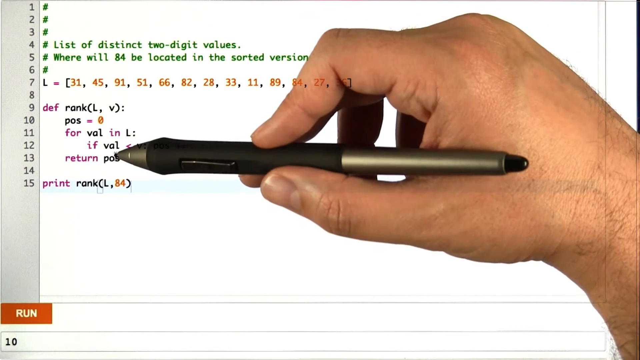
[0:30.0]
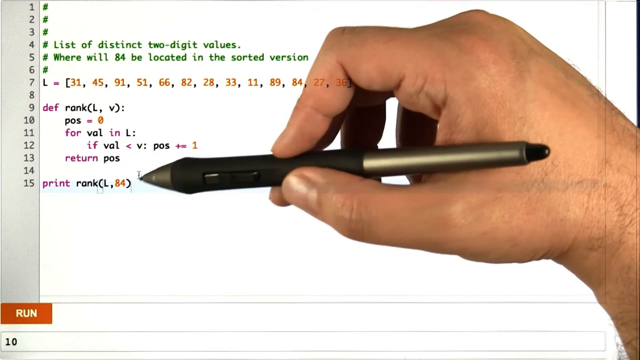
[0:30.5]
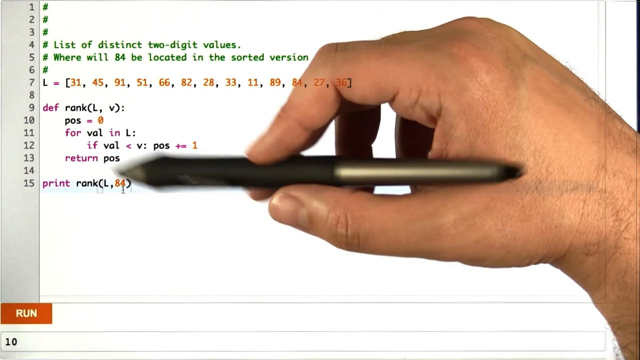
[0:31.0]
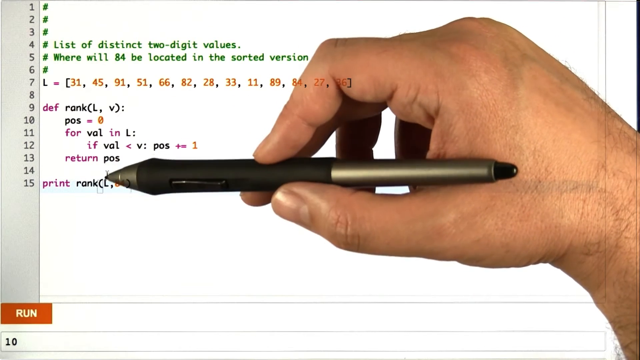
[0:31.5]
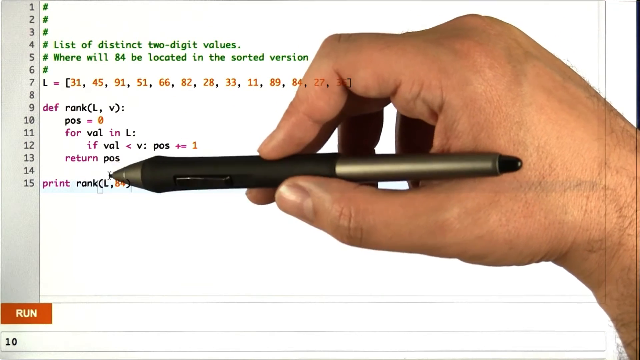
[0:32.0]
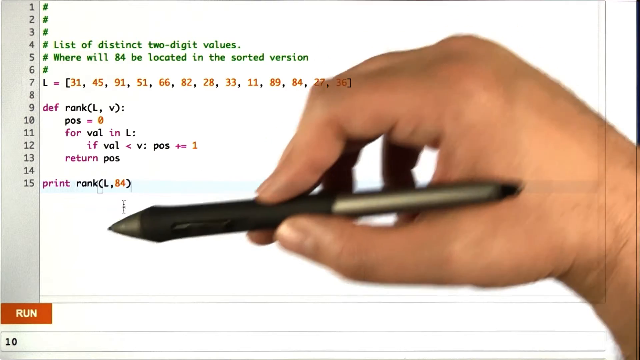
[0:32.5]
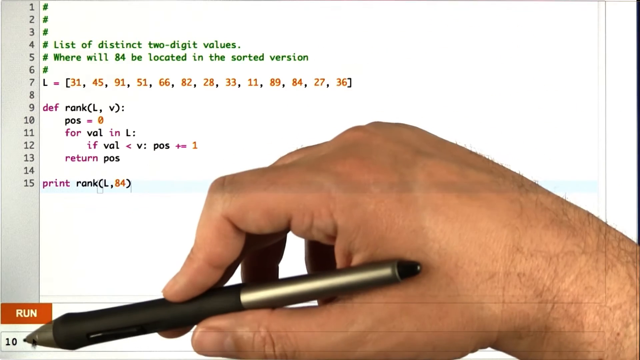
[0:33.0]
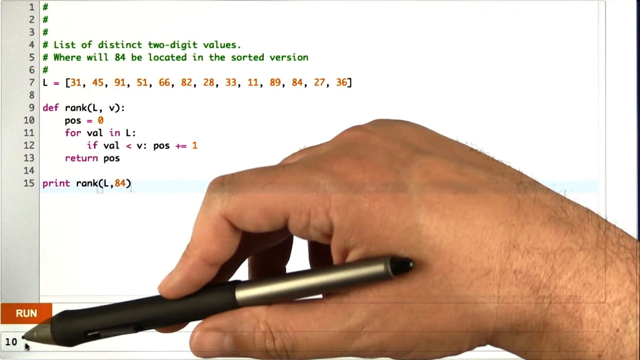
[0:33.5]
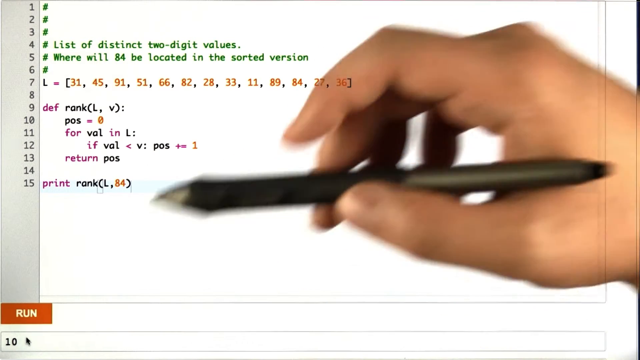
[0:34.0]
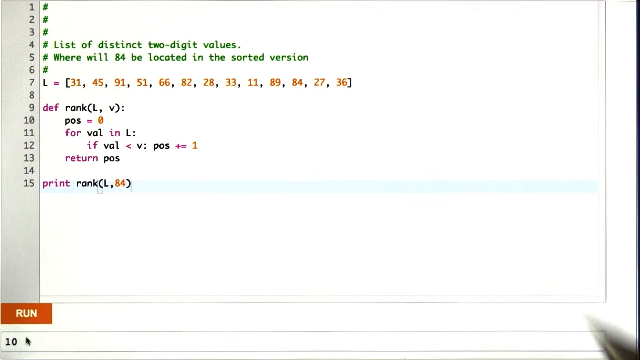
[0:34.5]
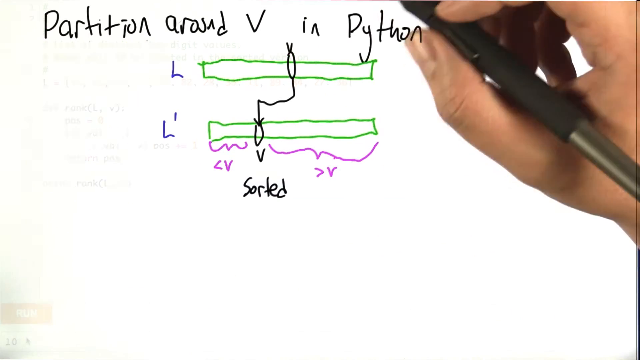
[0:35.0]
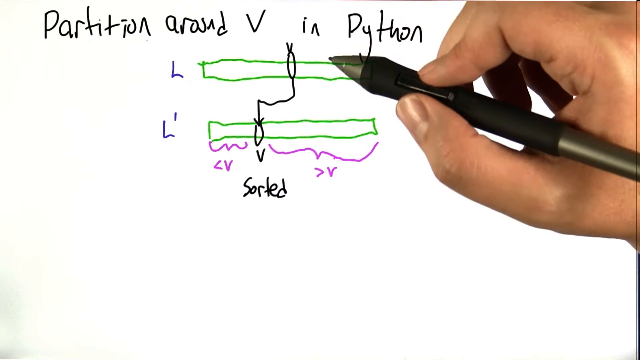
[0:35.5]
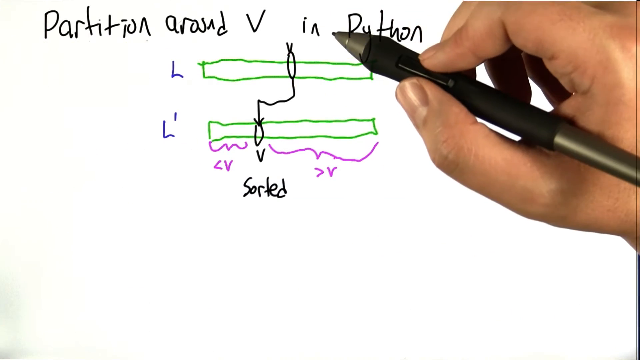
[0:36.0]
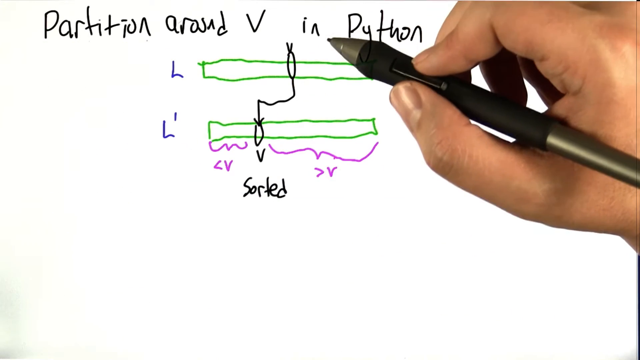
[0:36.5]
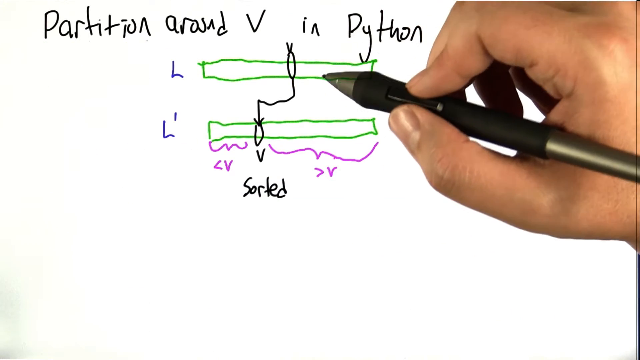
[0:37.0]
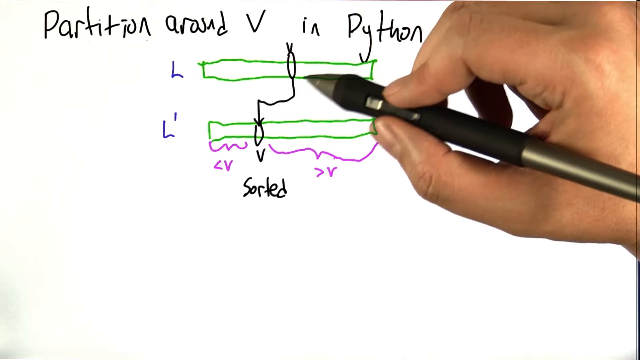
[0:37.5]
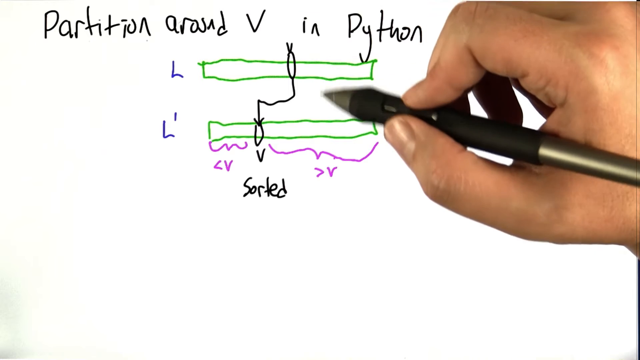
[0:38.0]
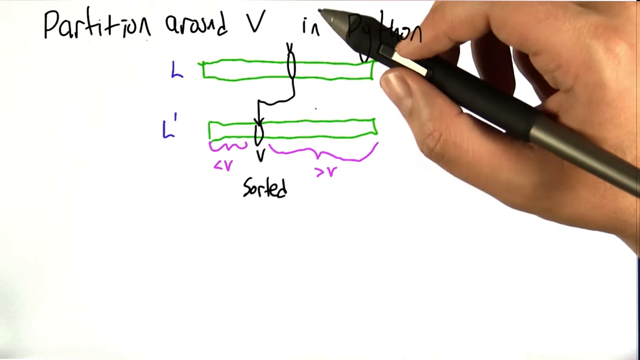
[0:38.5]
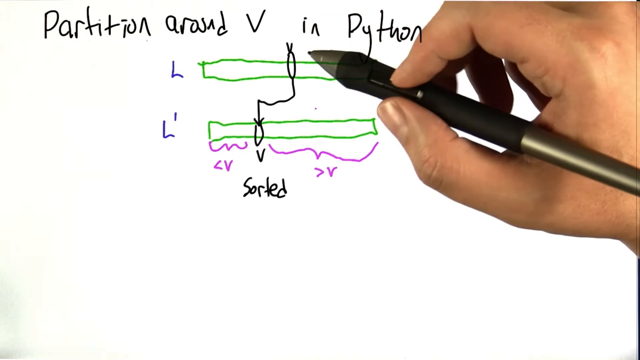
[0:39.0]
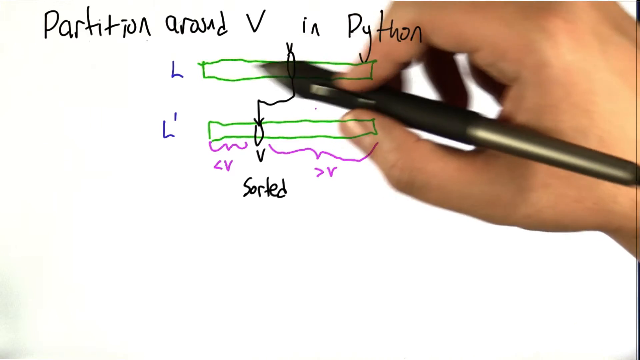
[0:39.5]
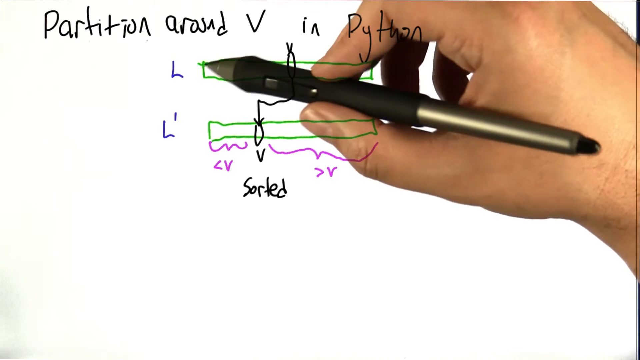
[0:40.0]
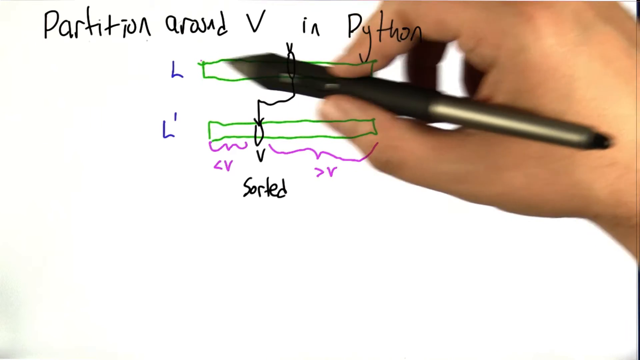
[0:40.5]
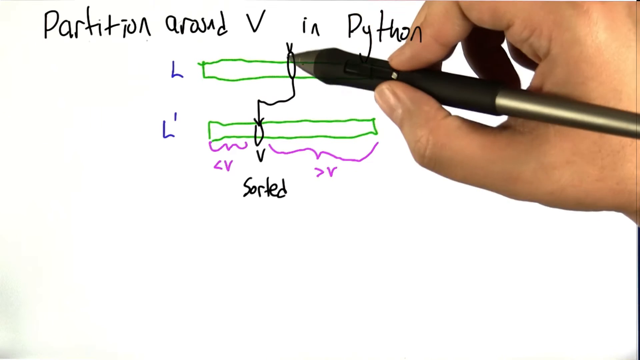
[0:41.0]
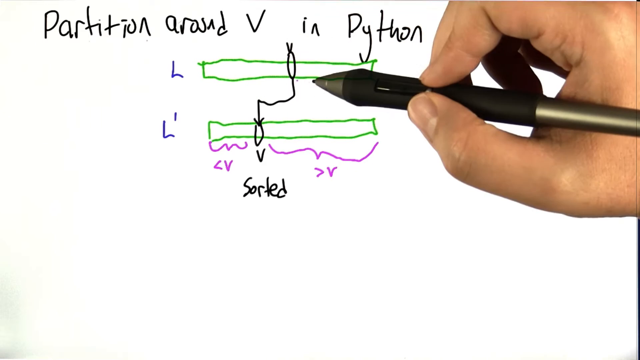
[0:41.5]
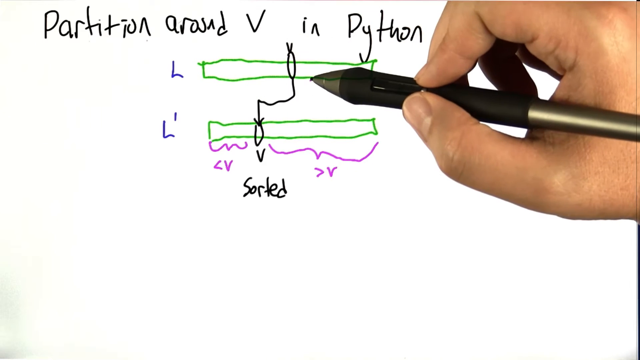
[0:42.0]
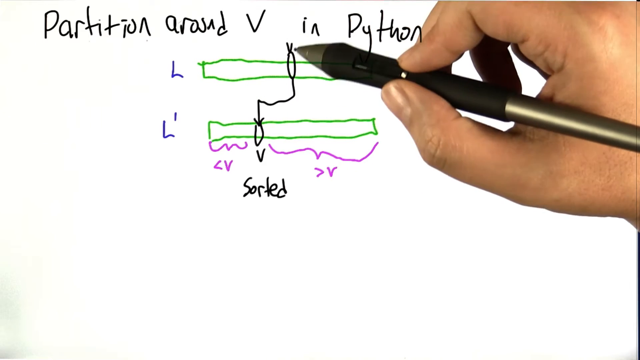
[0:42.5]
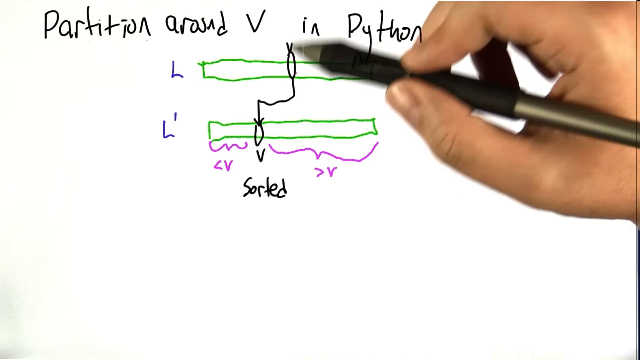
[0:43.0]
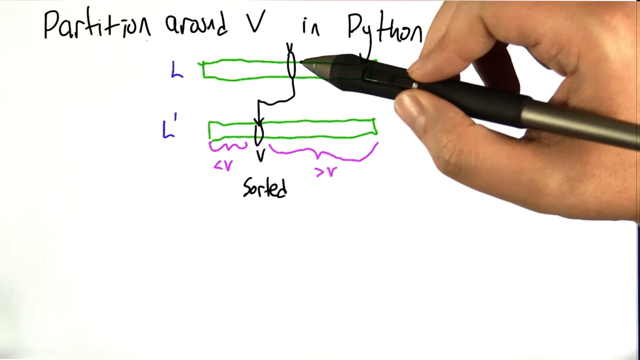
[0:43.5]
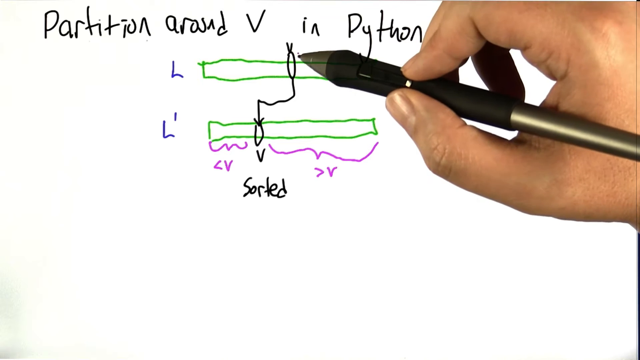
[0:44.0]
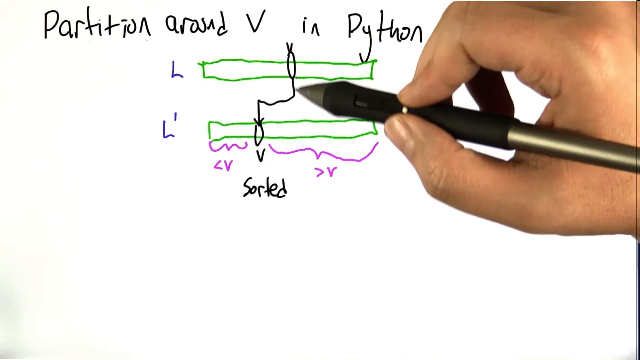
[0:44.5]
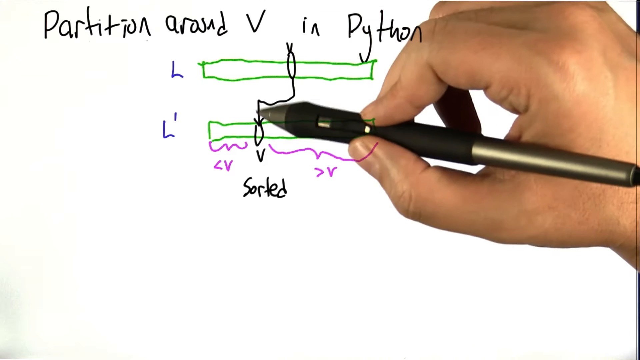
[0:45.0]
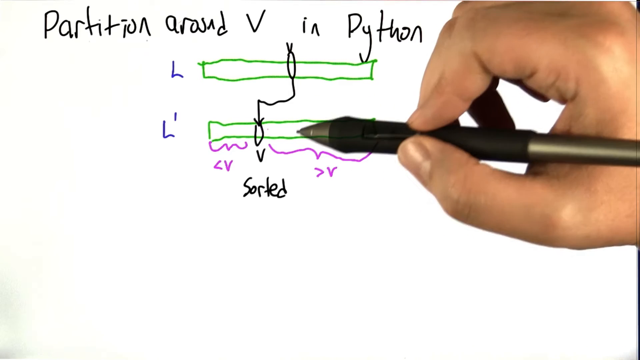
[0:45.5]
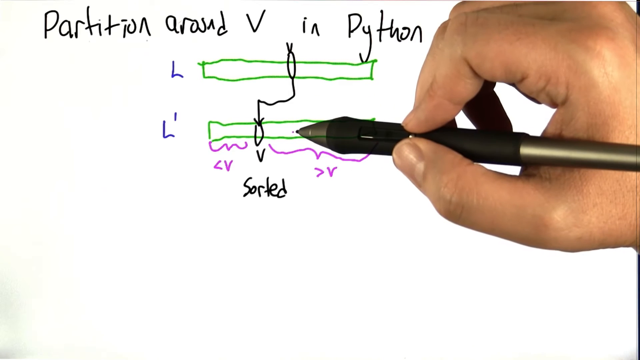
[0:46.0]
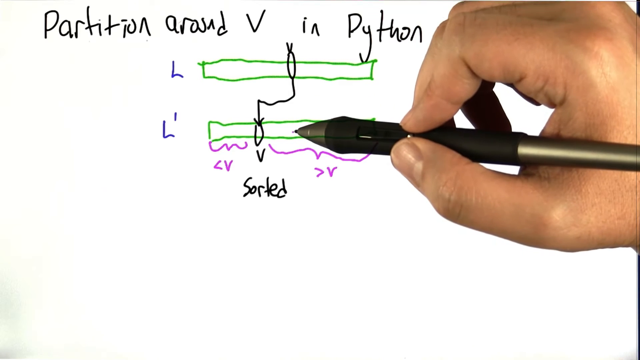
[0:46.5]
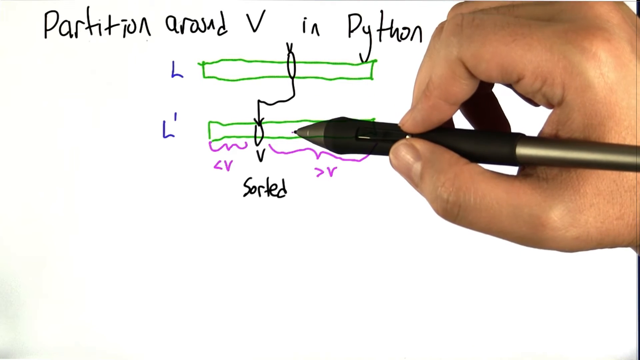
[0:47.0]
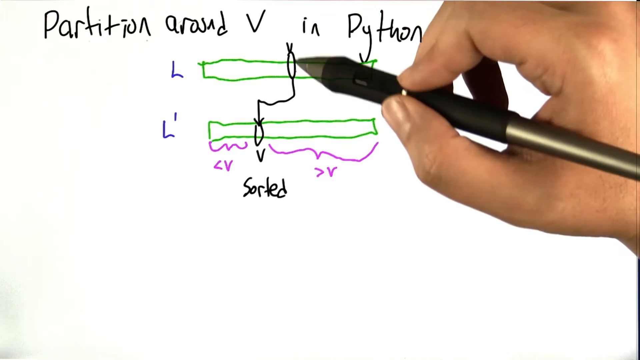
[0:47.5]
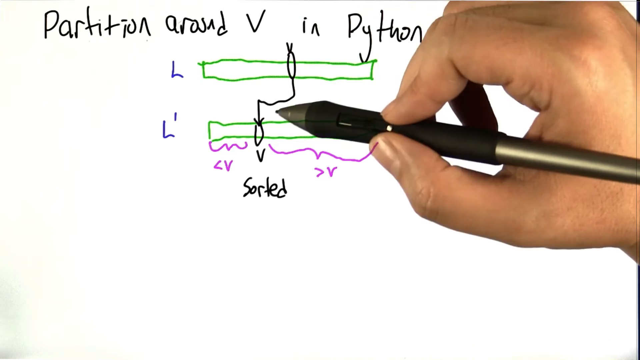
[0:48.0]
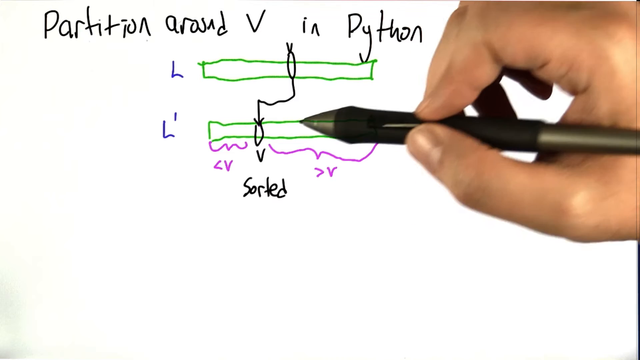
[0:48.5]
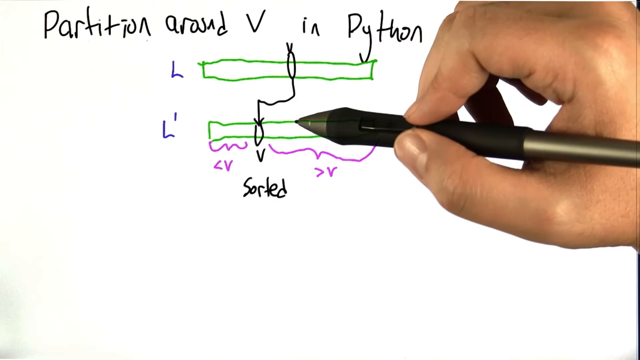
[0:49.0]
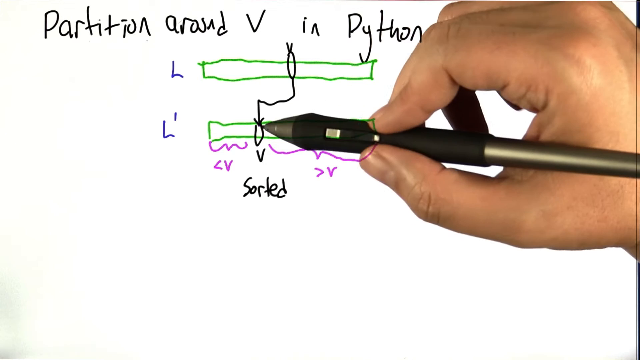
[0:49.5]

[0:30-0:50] On the page of code, a hand holding a pen points at line 13. The first six lines begin with number signs, marking them as comments, and are green. Line 4 reads "list of distinct two-digit values" and line 5 reads "where will 84 be located in the sorted version". Line 7 is actual code: L equals, in brackets, 31, 45, 91, 51, 66, 82, 28, 33, 11, 89, 84, 27, 36. Line 9 reads "def rank" followed by L comma V in brackets and a colon; line 10 reads "POS = 0"; line 11 reads "for val in L:"; line 12 reads "if val < V: POS += 1"; line 13 reads "return POS"; and line 15 reads "print rank" followed by L comma 84 in brackets. The pen focuses on lines 12 and 13, going back and forth to line 15. It then moves to the bottom of the screen, where the word "run" appears in orange with the number 10 beneath it. The view then changes to another page that looks like a drawing. At the top are the handwritten words "partition around V in Python". Beneath them is a blue L followed by a large green rectangle, and under that an L with an apostrophe next to a green rectangle of the same shape. There is a circle in the middle of the L rectangle and a circle on the L apostrophe rectangle close to 30% of the way in, with two lines connecting the circles. Below the L apostrophe rectangle, the part before the circle is labeled as less than V and the part to the right is labeled greater than V, and the two connected circles are labeled "sorted". The pen moves back and forth between the lines, seemingly highlighting what they mean, apparently as instructions about the drawing.